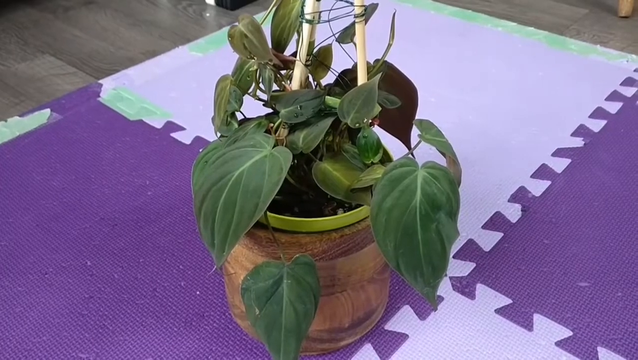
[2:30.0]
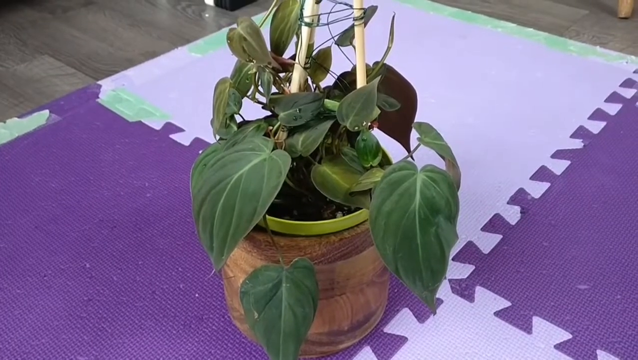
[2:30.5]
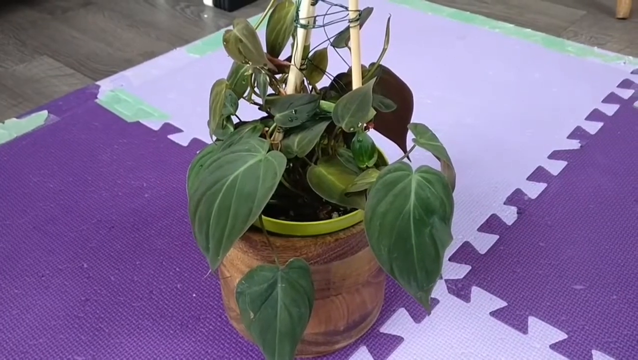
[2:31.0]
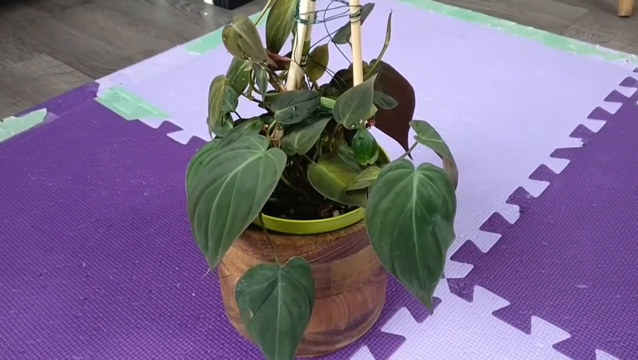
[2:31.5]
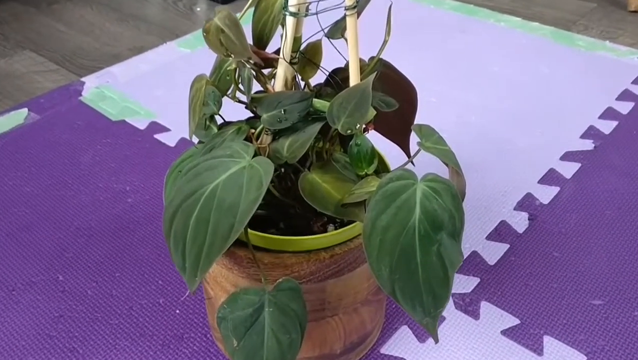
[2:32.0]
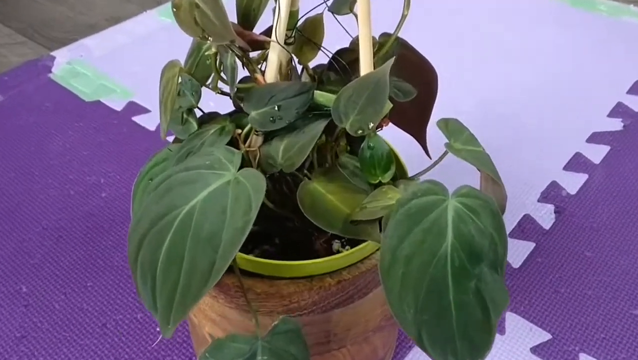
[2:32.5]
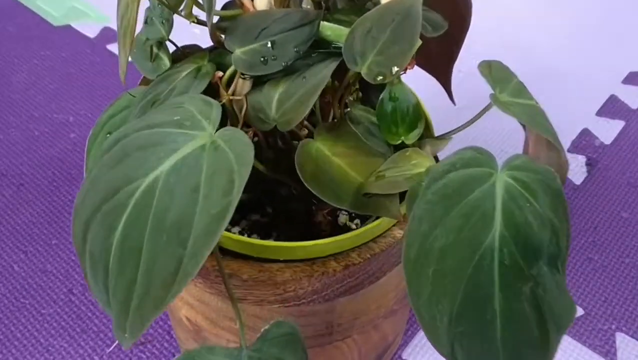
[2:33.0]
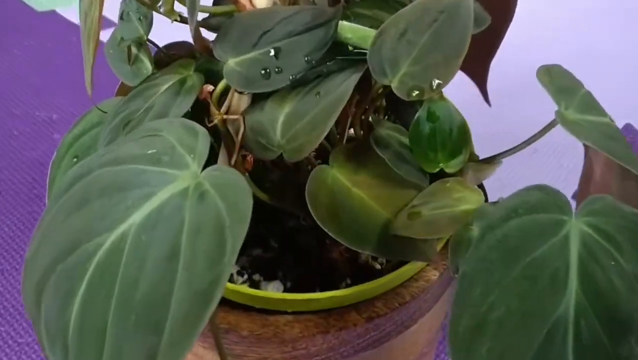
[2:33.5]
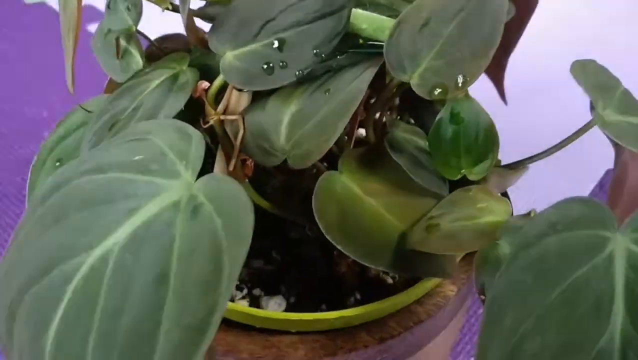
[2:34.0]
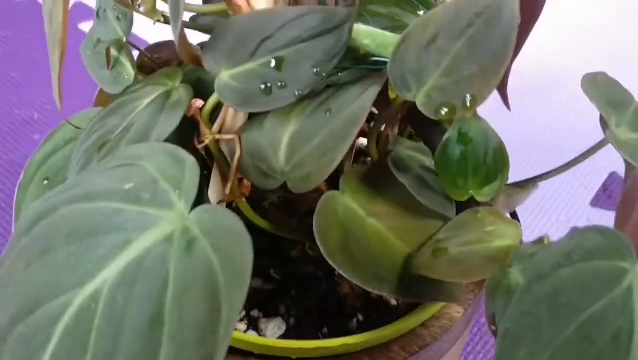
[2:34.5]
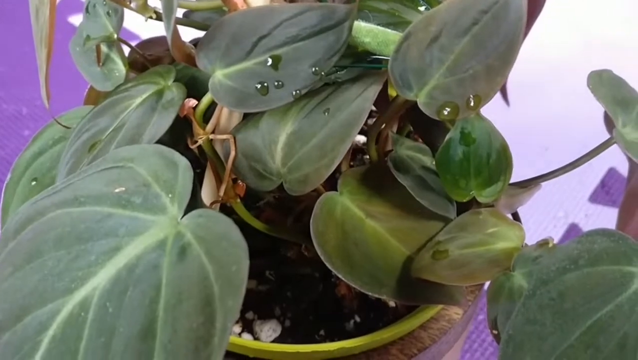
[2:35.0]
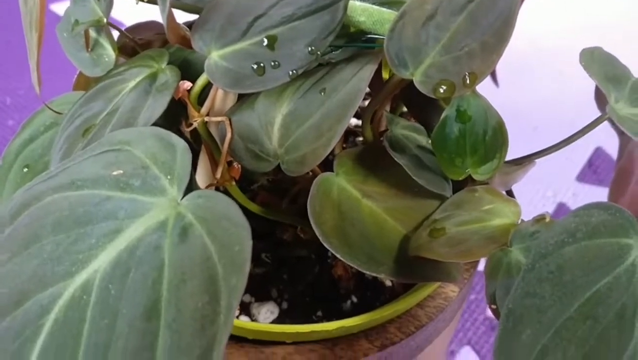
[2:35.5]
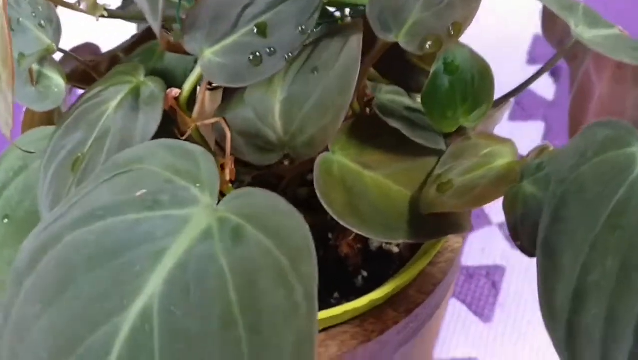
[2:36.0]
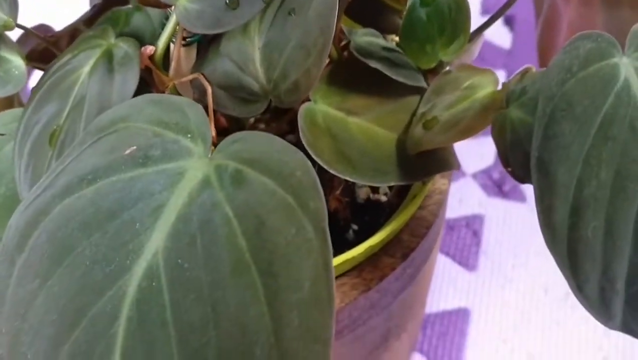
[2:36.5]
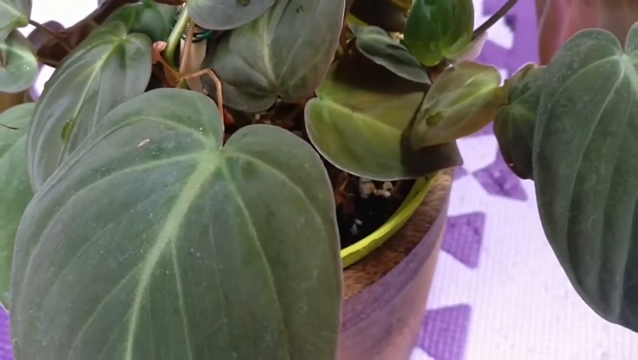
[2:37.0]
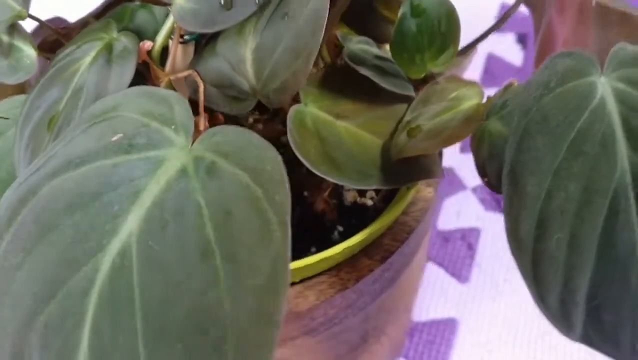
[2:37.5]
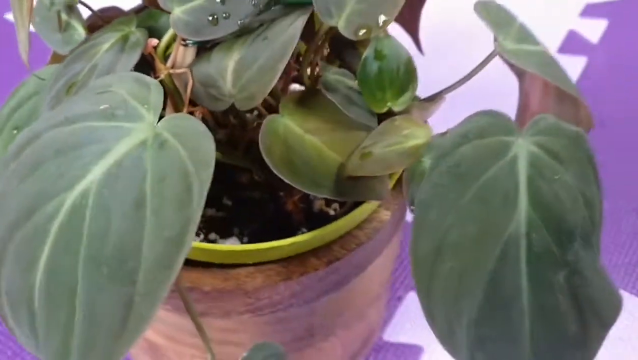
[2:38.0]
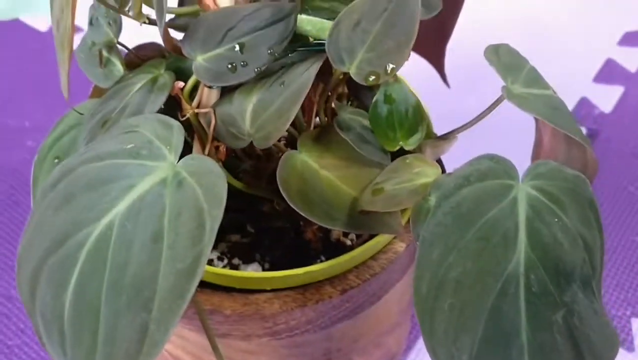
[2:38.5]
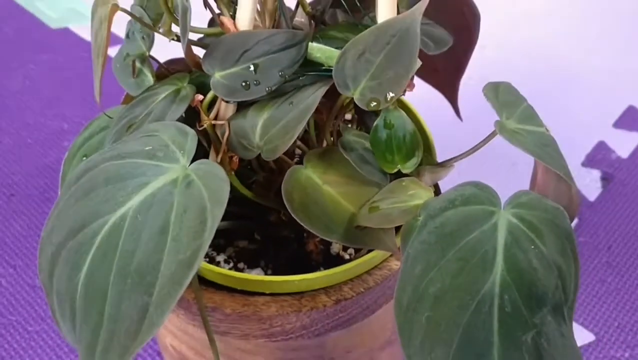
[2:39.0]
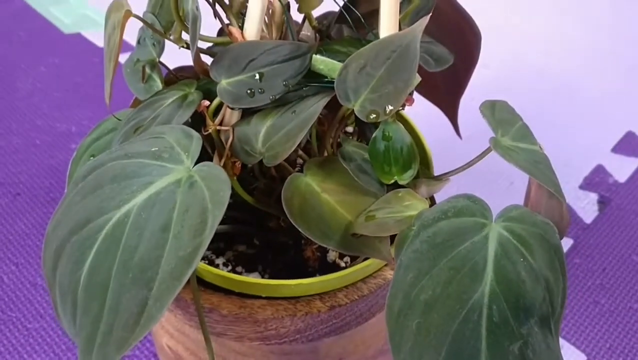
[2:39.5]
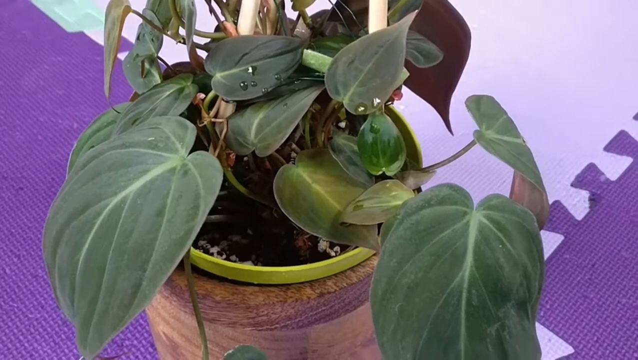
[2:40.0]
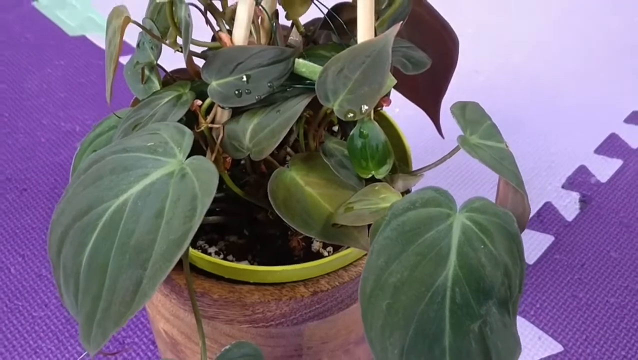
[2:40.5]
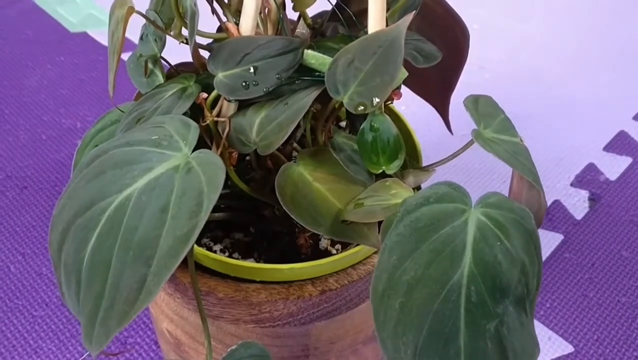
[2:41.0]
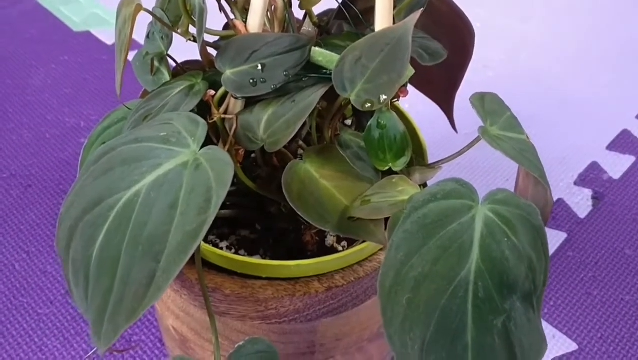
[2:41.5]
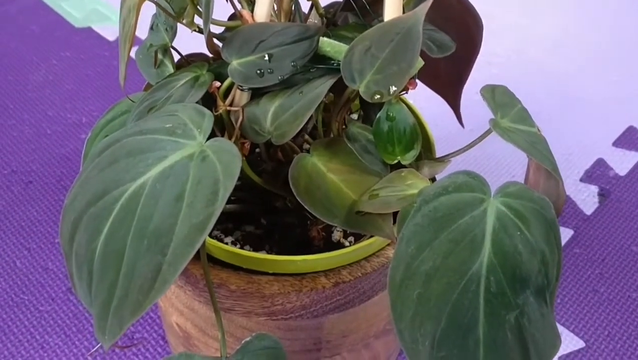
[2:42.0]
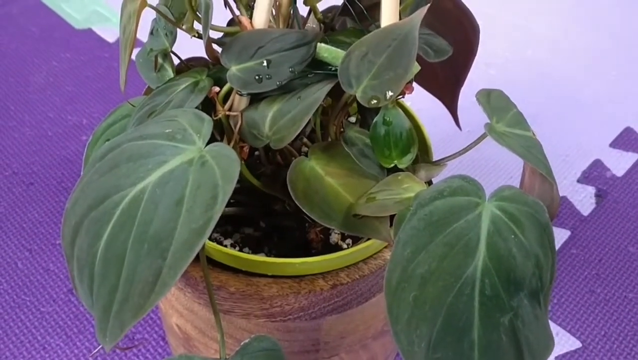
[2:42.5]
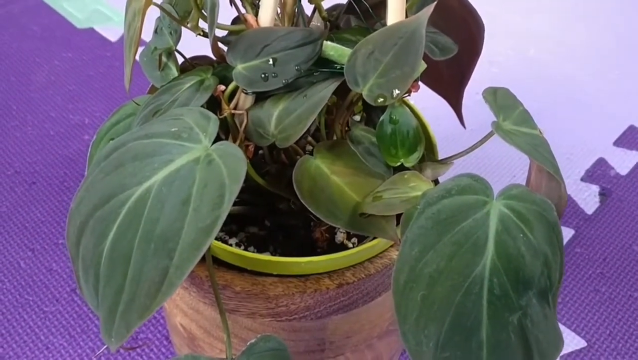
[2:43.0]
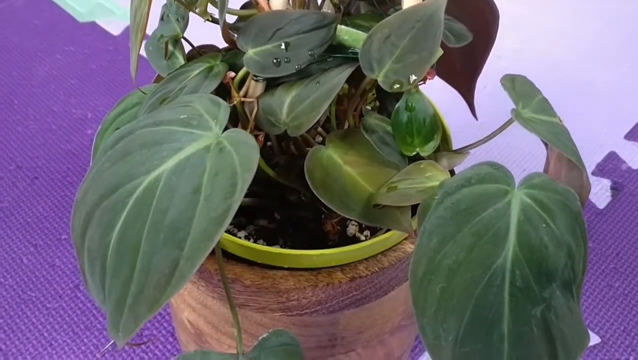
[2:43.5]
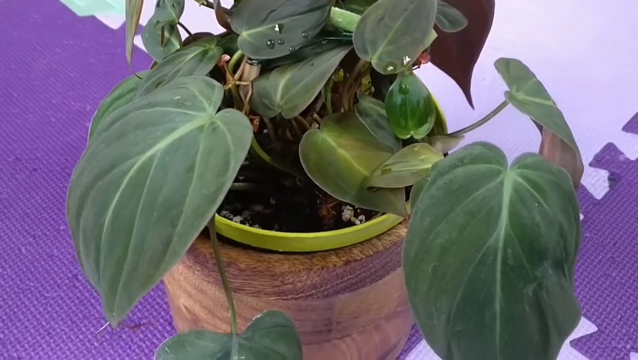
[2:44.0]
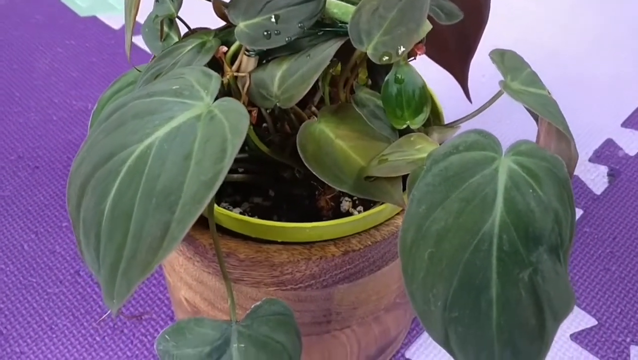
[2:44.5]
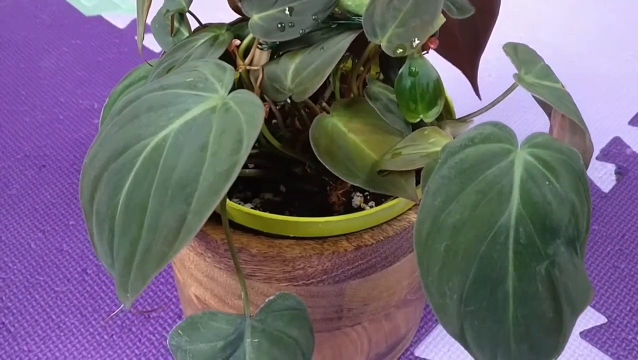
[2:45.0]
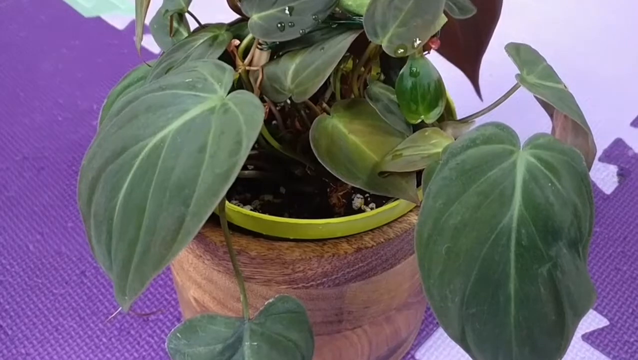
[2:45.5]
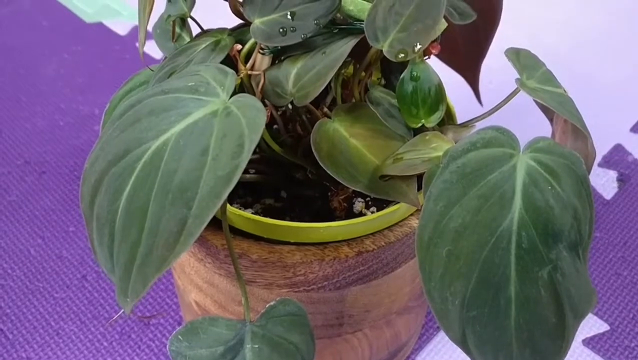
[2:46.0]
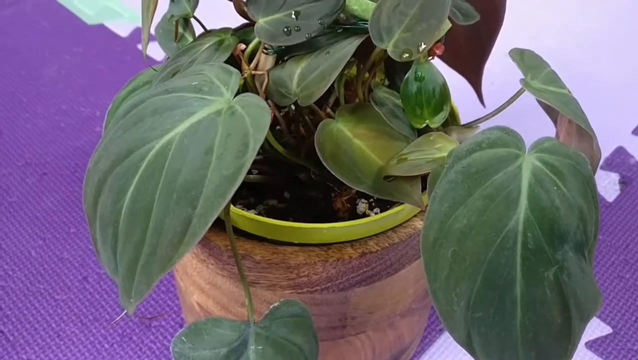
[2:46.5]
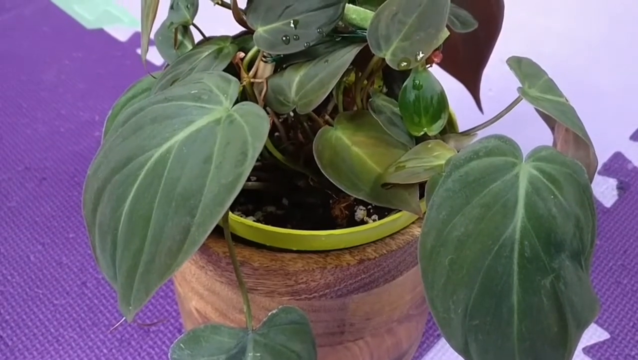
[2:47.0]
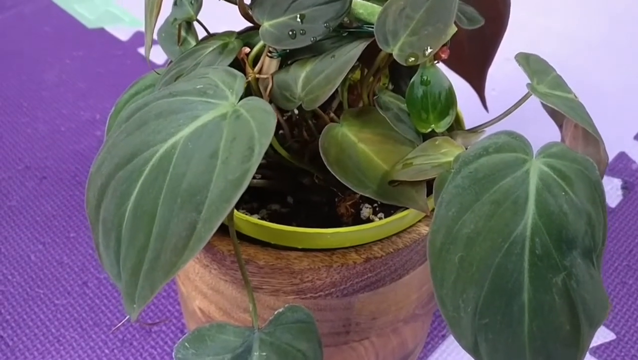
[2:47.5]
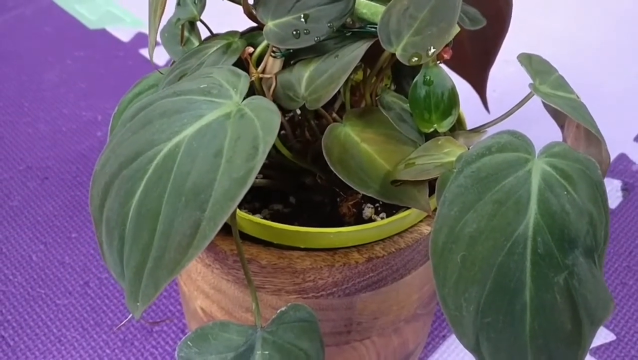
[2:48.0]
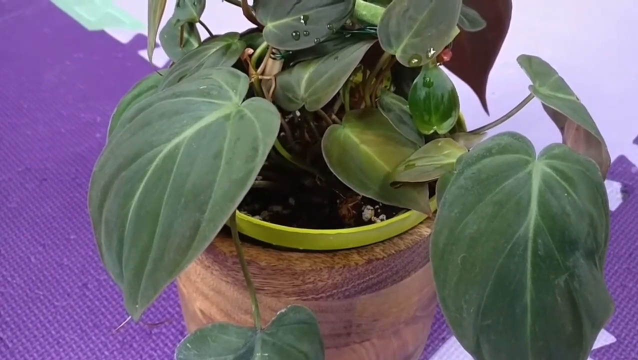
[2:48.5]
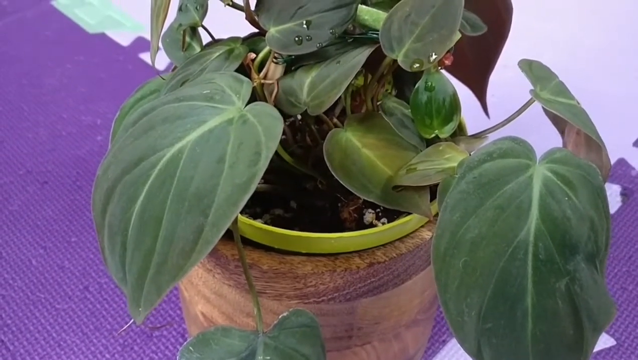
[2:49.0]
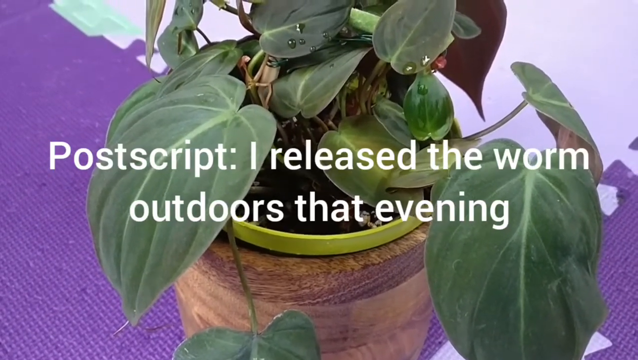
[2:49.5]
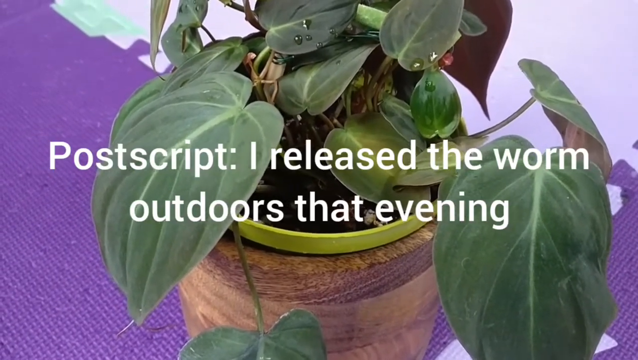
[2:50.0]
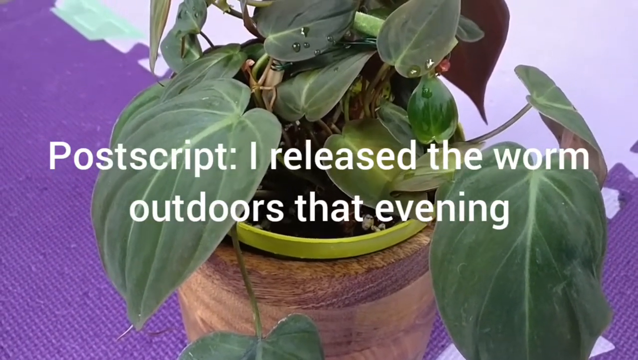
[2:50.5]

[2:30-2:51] A green, leafy plant in a pot is shown, possibly outdoors or in a big, well-lit room. The floor has a purple and white foam mat. The person filming steps forward and zooms in closer on the plant, showing little drops of water on its leaves. They then back up a little for an overview shot, with the camera bobbing slightly. Text appears over the plant footage: "PostScript. I released the worm outdoors that evening." After that, a different screen with a lot of text appears, a side note that says "important note" and starts explaining things.